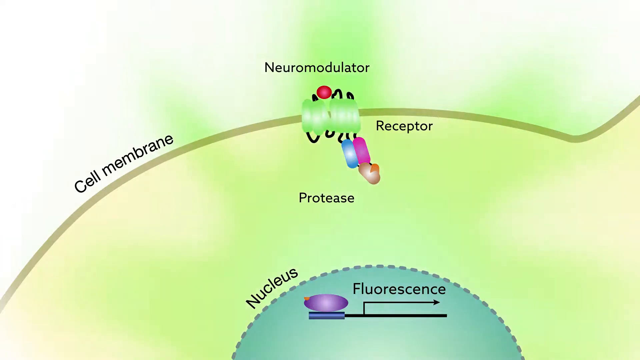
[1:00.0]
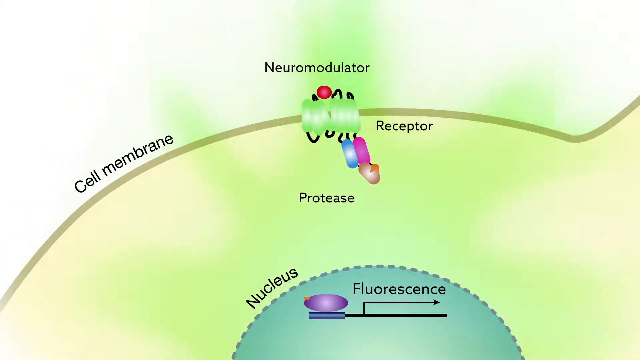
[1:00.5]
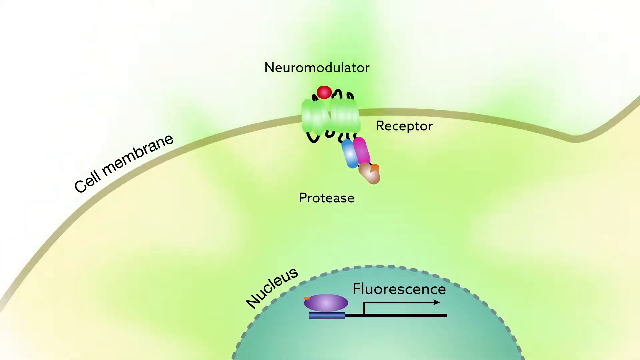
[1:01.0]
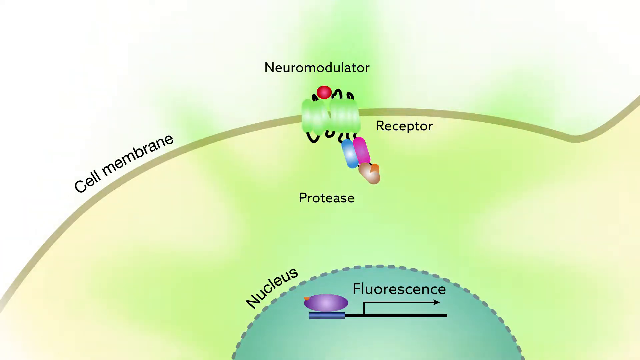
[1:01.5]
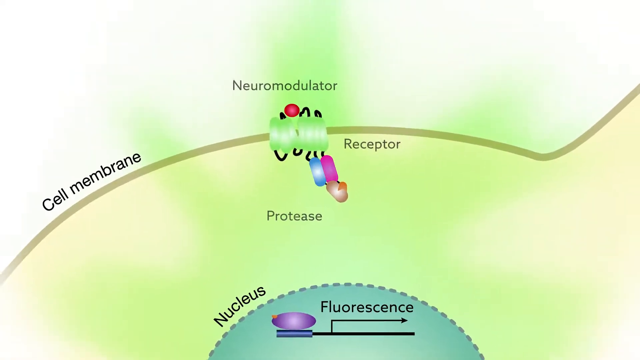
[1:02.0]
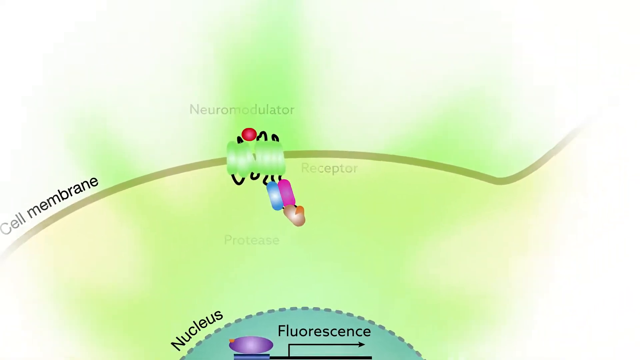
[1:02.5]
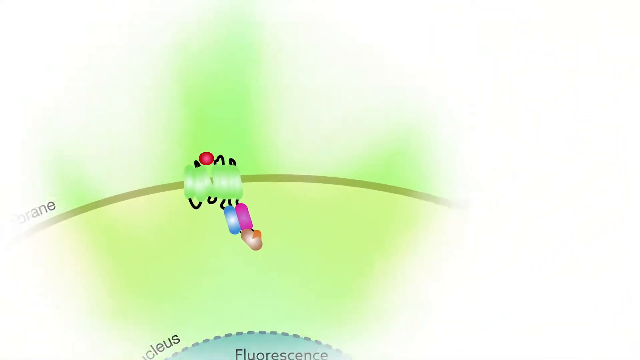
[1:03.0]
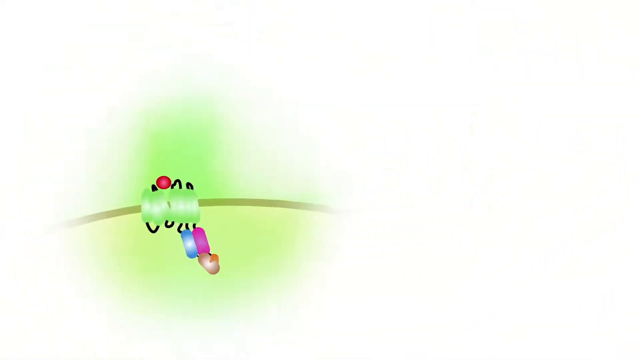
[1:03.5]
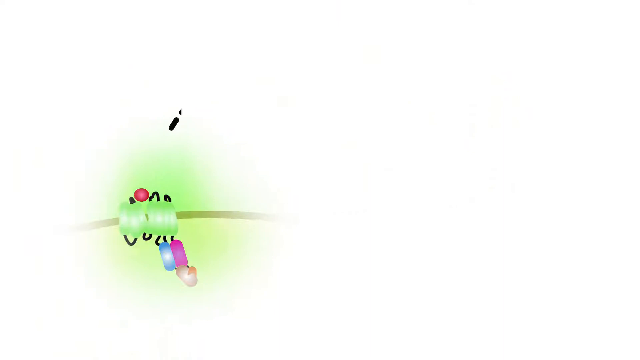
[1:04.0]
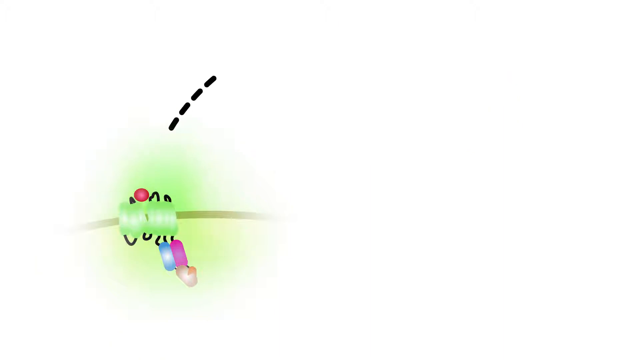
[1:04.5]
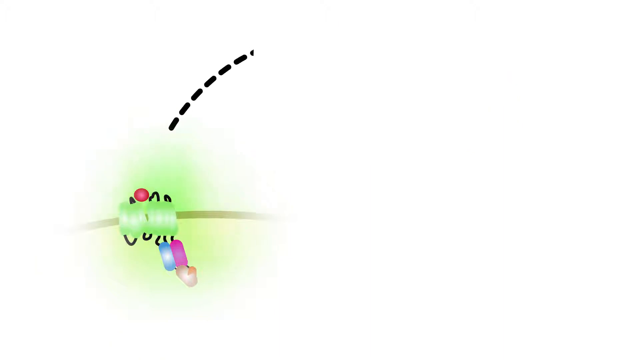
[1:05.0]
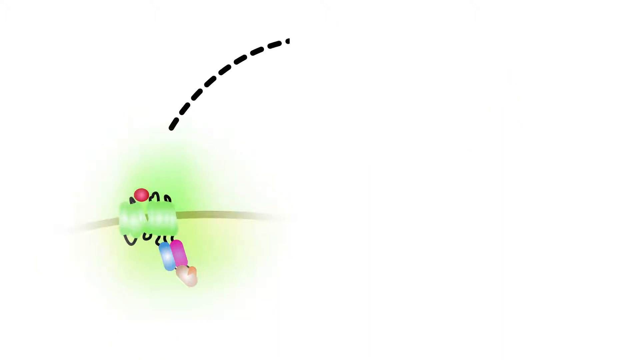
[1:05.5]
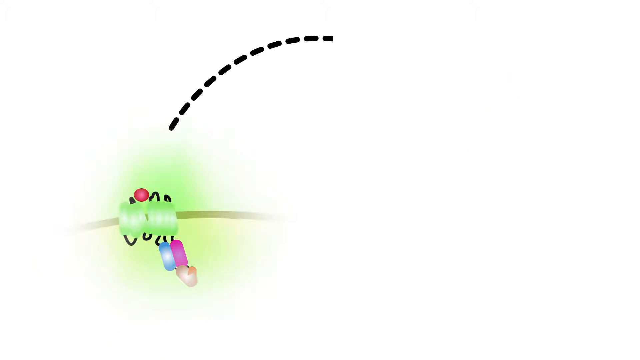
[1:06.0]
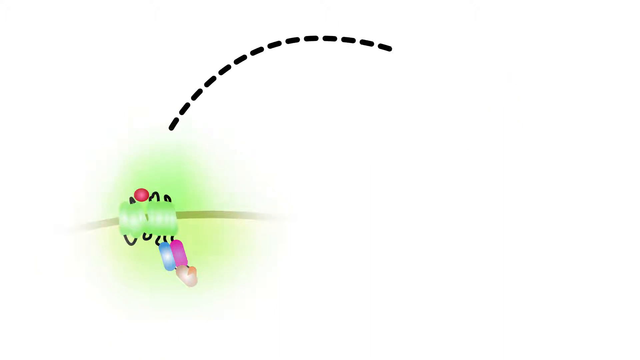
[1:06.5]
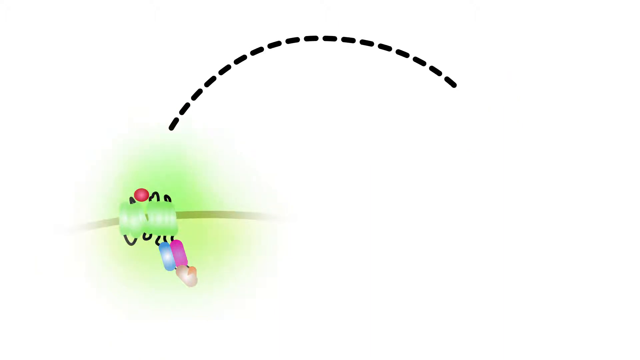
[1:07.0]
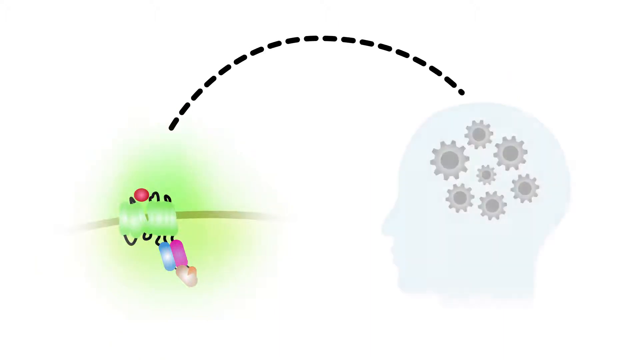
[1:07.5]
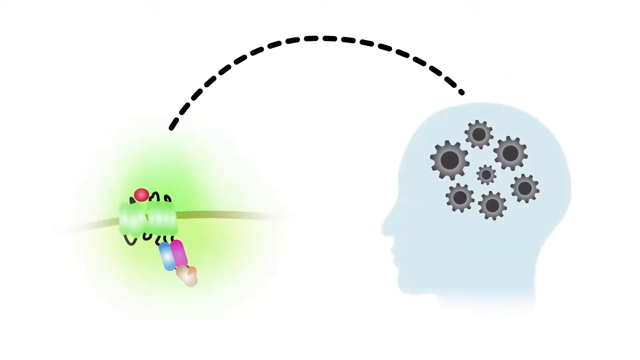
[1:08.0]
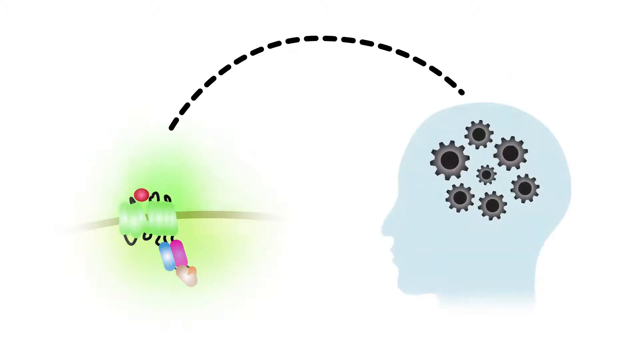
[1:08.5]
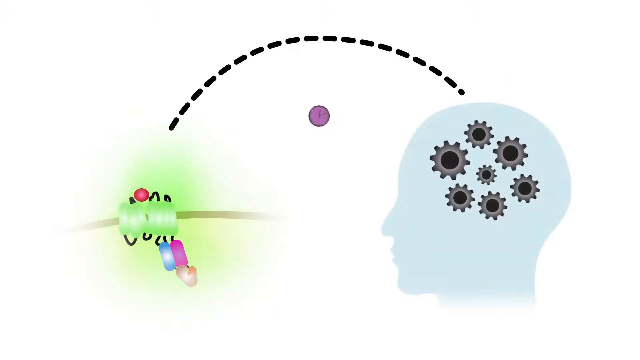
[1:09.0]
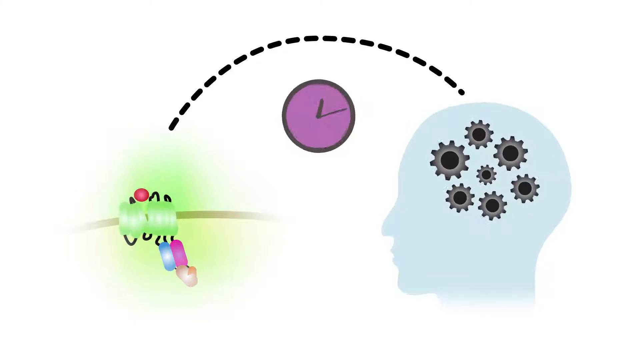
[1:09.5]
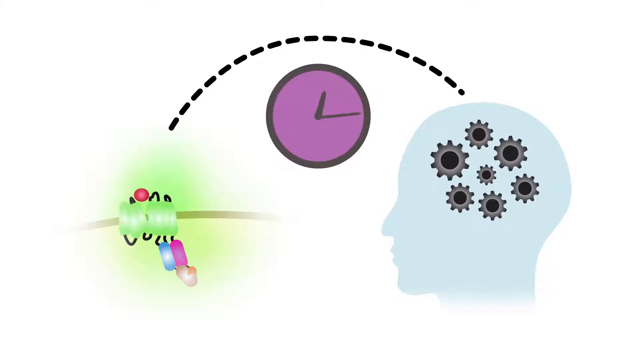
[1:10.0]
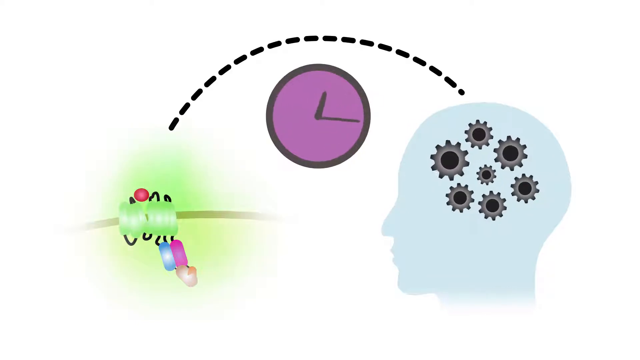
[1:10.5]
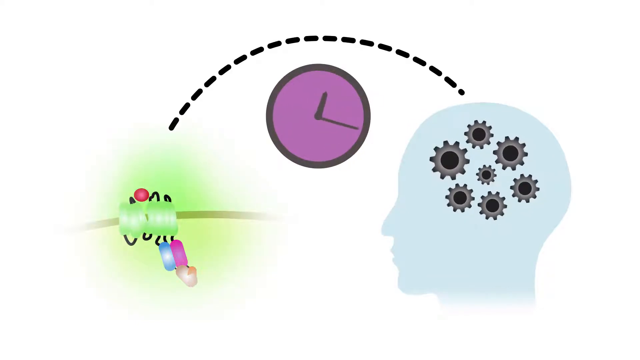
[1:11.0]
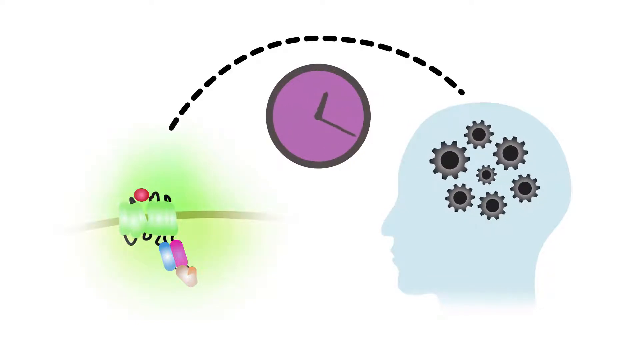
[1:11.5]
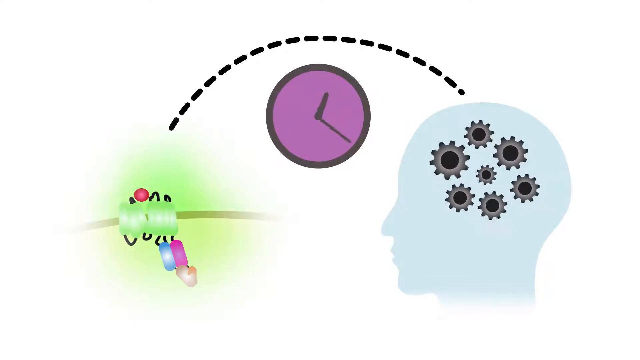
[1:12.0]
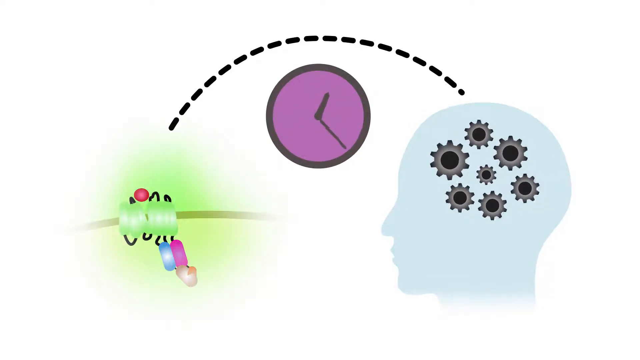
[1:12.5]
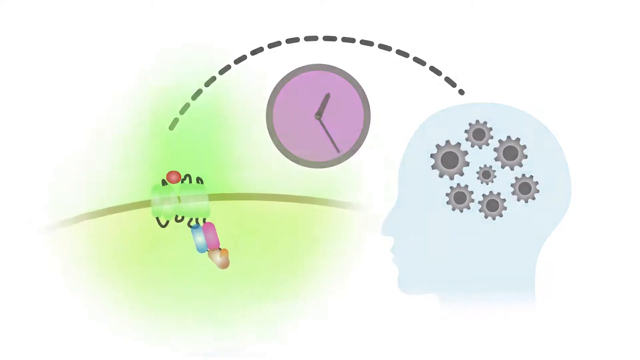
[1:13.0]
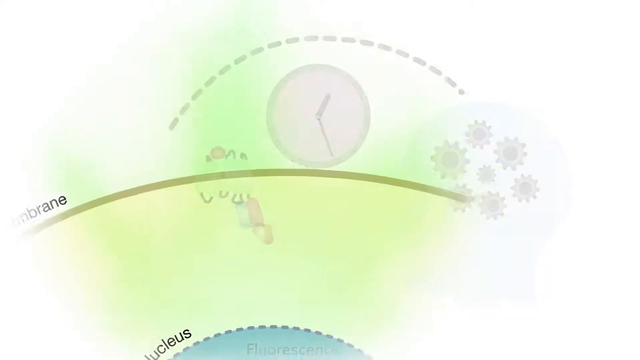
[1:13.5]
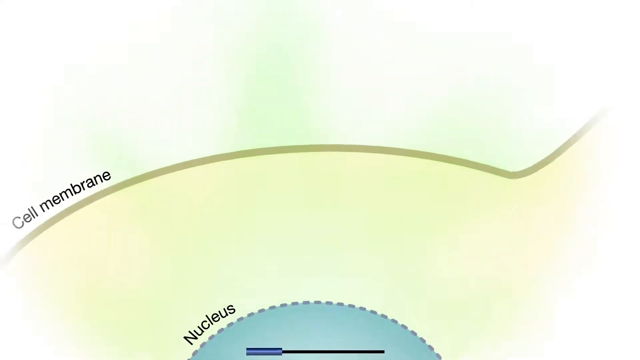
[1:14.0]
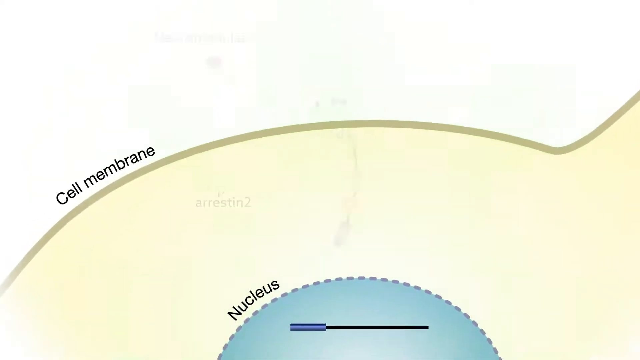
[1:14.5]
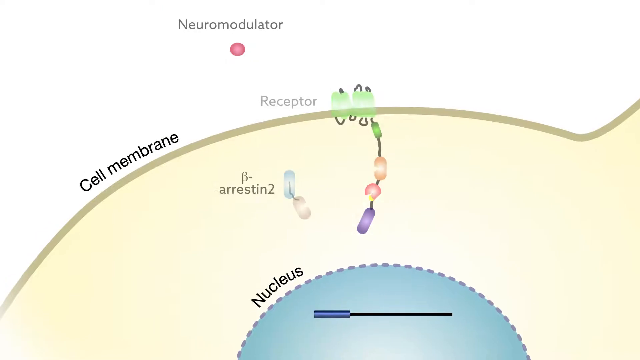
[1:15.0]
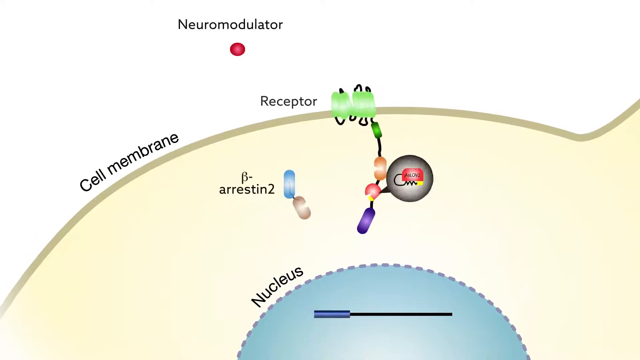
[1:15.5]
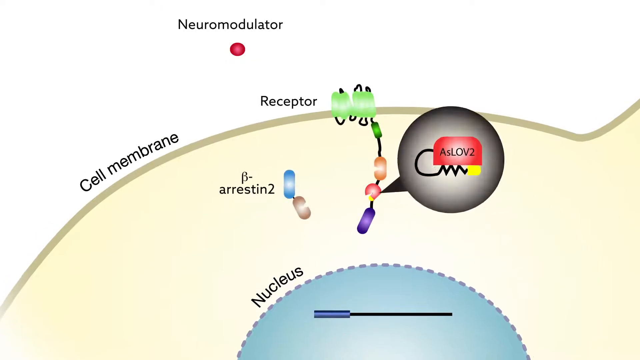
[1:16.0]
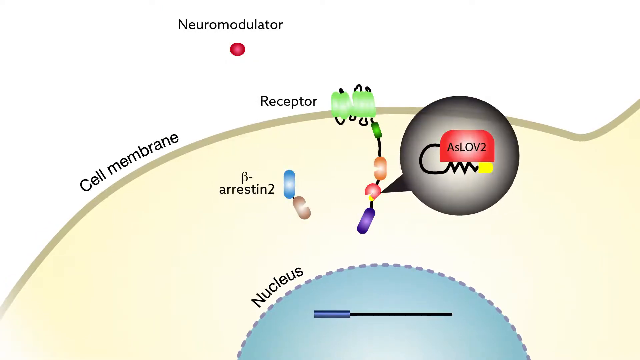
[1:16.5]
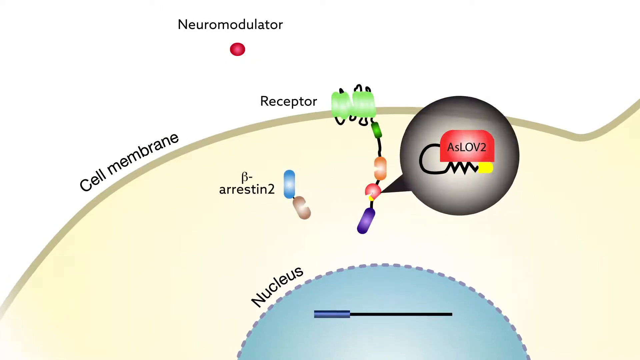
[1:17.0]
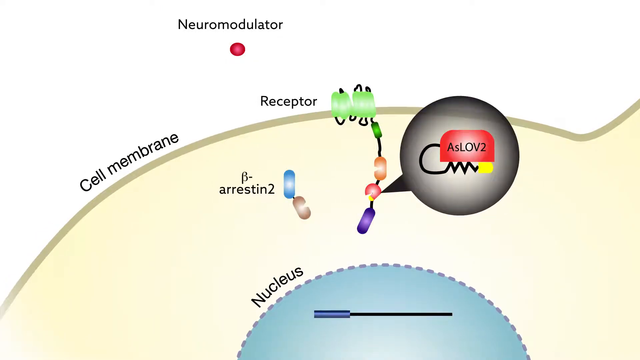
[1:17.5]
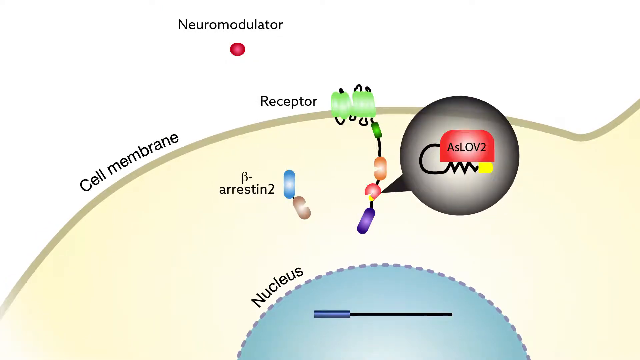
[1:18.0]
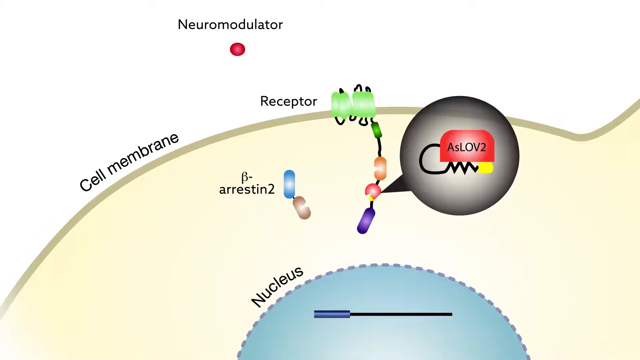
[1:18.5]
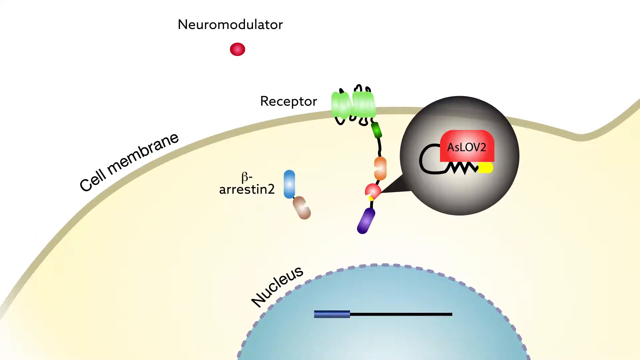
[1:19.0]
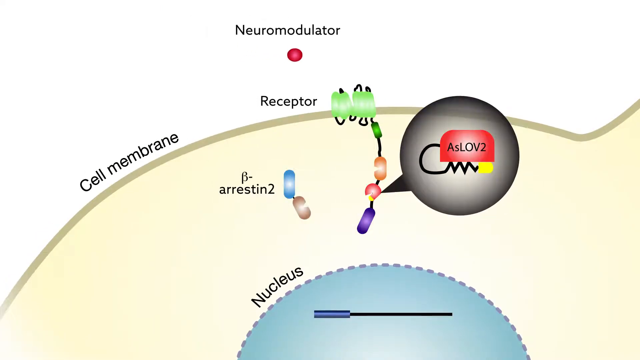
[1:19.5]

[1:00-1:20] The neuromodulator and protease are shown together with the receptor. A green glow comes from the neuromodulator, expands, and then goes back into the neuromodulator. The labels then disappear, and a black dotted or dashed line arches upward over to the right side, where there is the silhouette of a man with his brain replaced by a bunch of gears. In the middle of the arch, a clock turns constantly but very slowly, apparently to show the process working slowly over time. The video returns to the animation and spotlights the ASLOV II, a red orb on the diagram.